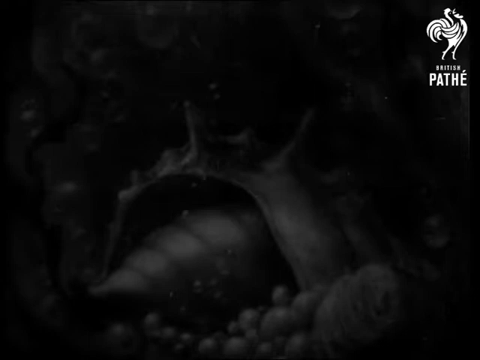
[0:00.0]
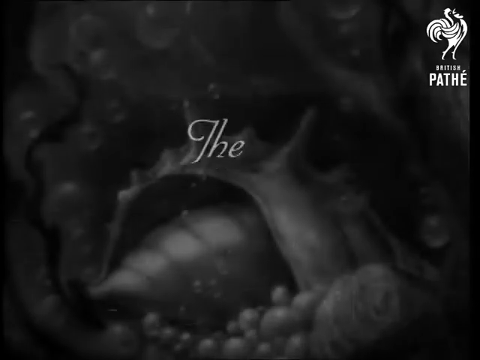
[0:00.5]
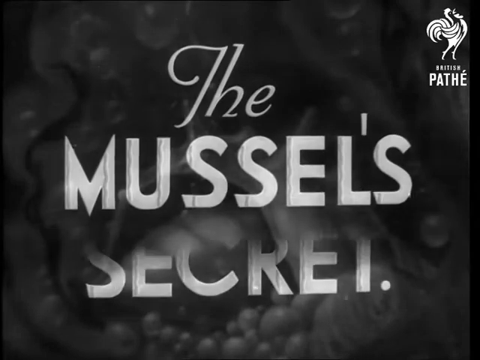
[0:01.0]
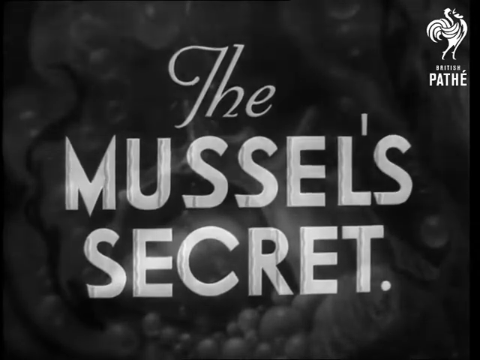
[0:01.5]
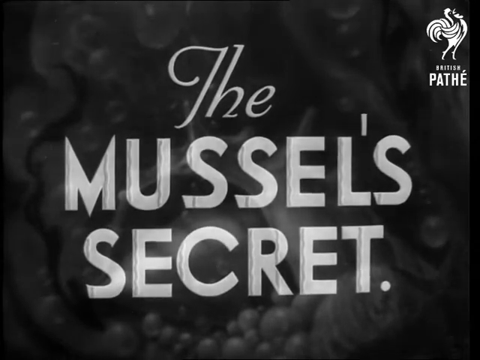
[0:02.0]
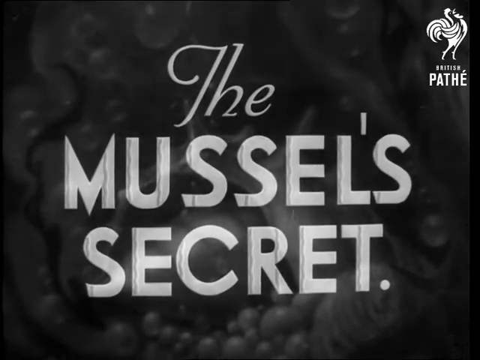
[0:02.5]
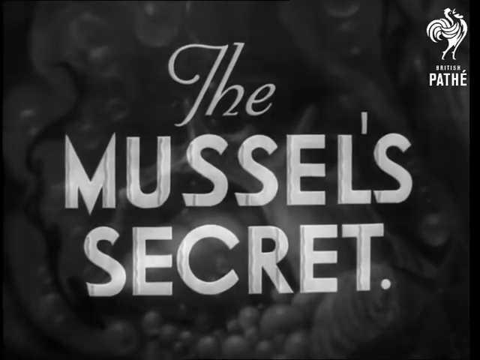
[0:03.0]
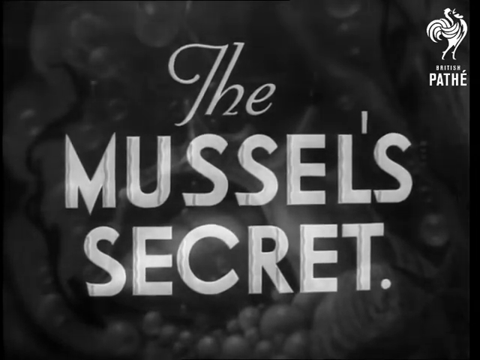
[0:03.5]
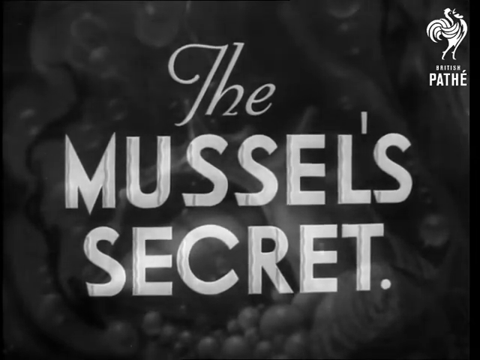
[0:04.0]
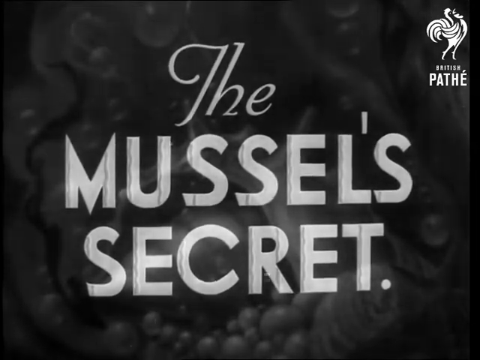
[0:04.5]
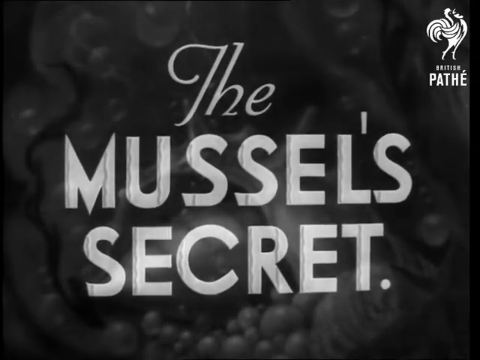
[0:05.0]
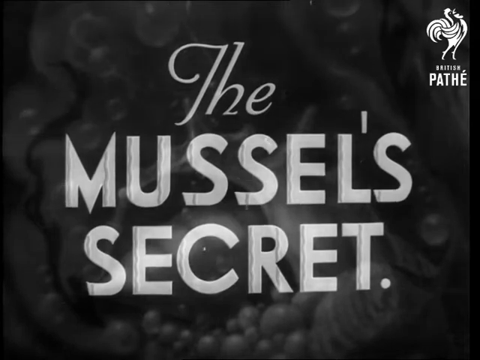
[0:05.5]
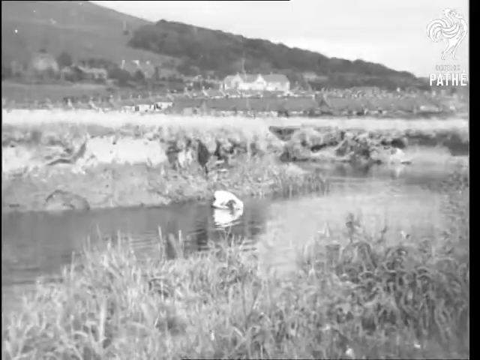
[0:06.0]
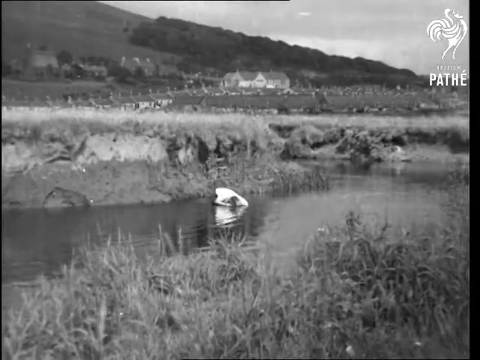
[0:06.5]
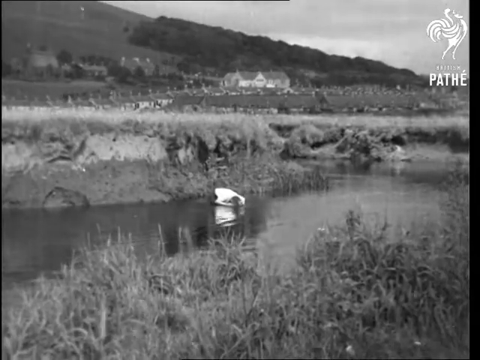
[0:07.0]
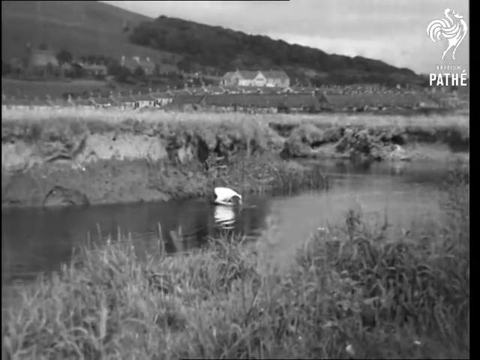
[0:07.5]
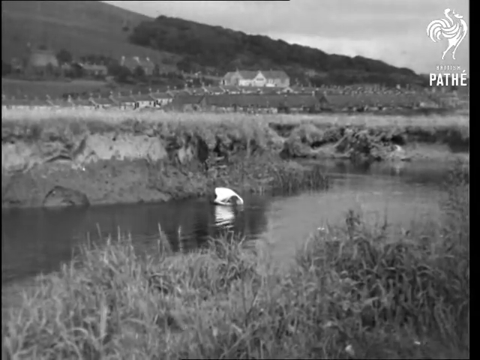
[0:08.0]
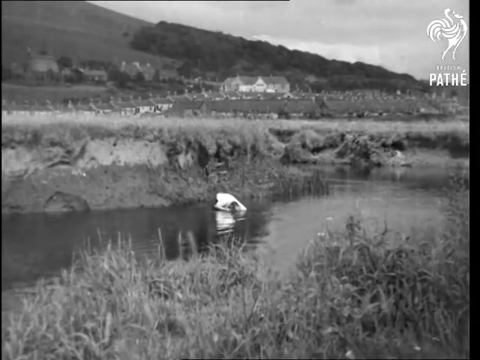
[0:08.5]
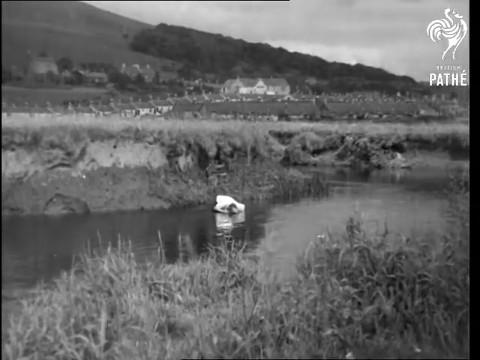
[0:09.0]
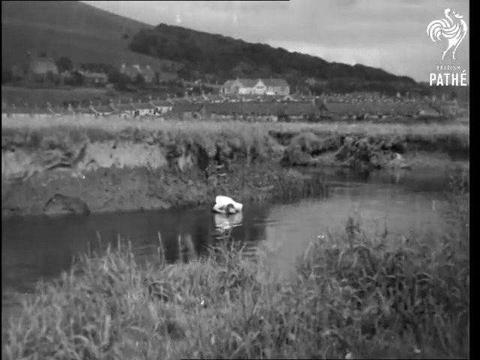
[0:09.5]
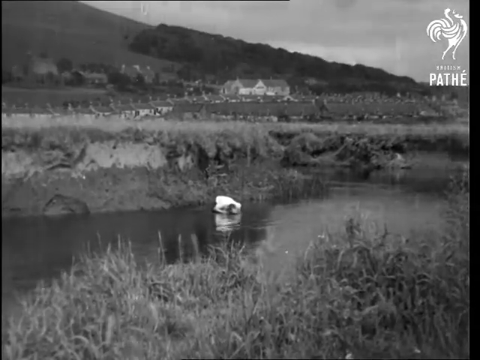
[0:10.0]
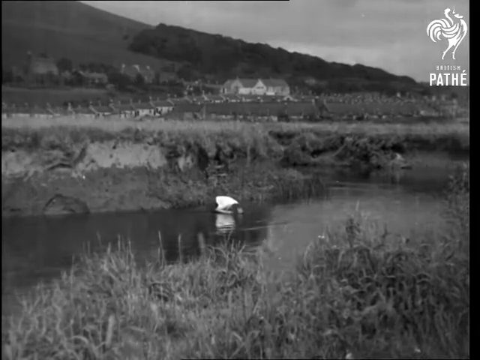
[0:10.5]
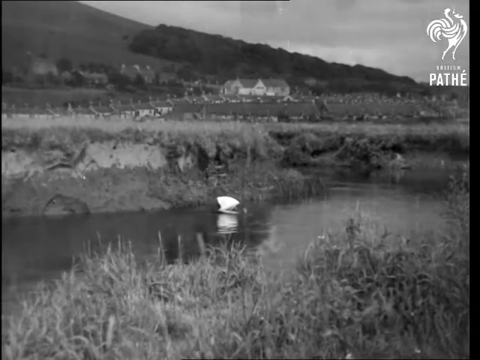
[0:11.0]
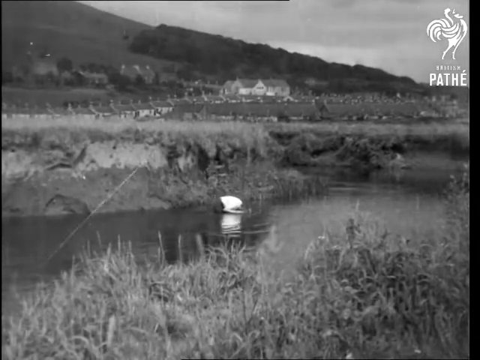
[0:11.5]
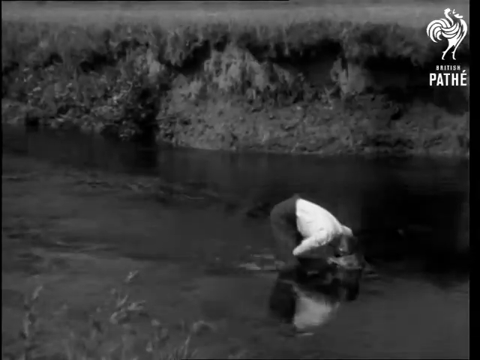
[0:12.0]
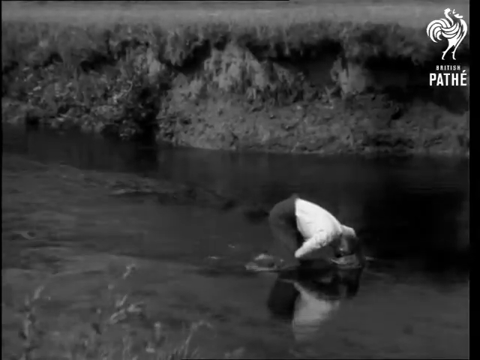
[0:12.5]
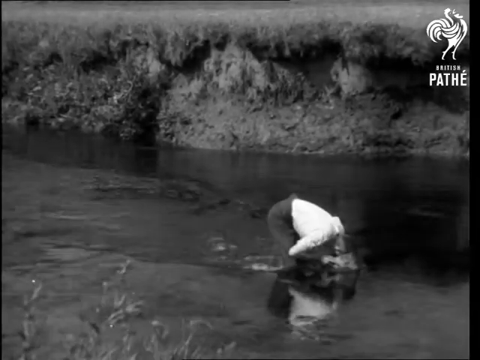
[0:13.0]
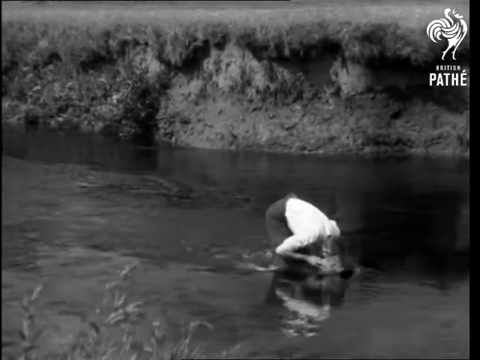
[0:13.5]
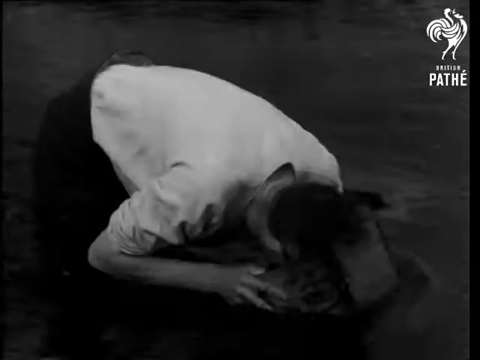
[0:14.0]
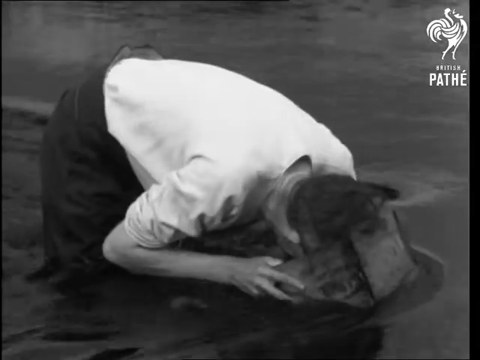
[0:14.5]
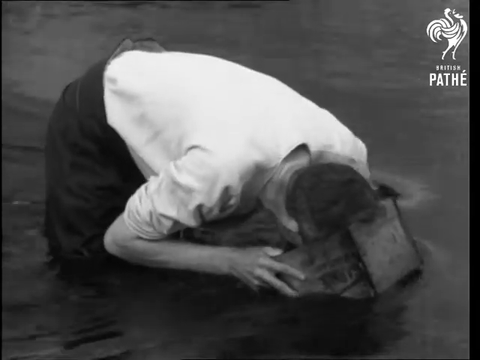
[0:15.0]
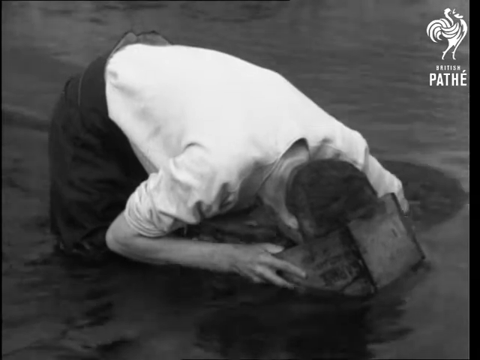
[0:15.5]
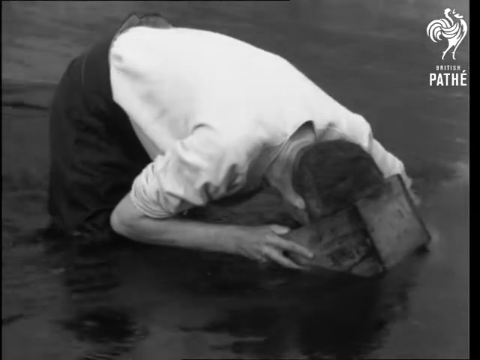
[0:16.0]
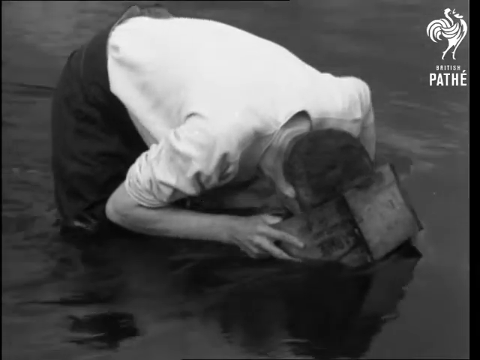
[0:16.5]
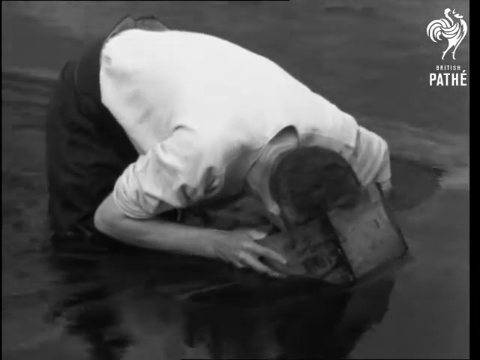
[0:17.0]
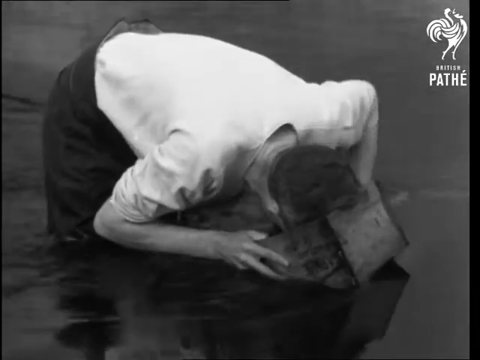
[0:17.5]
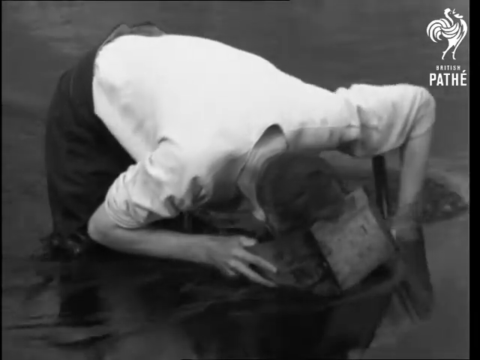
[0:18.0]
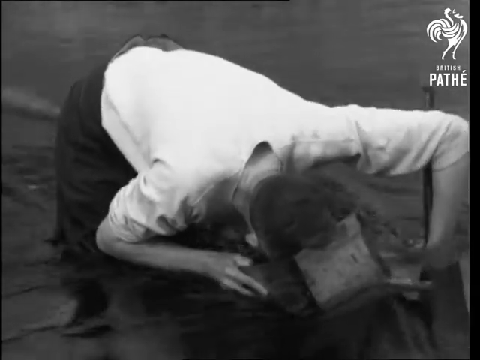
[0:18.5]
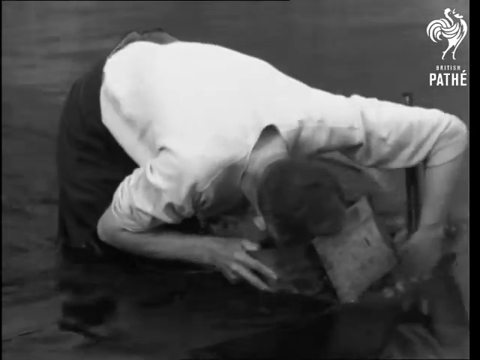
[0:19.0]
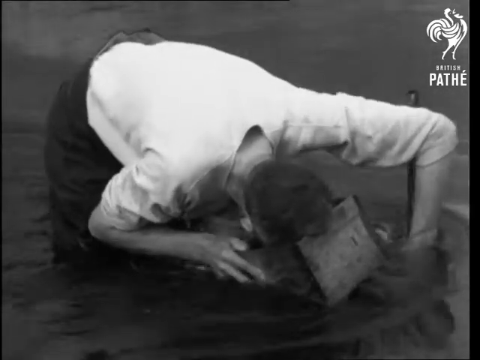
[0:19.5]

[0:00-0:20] The video is in black and white, and an overlay of text appears that says "the mussel's secret." In the upper right-hand corner it says "British Pathe," and there is a rooster crowing. At the beginning, what looks like a pond or a river is visible, with numerous houses along the edges in the background, a hill up to the left, and trees in the distance. The water is surrounded by tall grass. A person is in the water, wearing pants and what looks like a button-up shirt, and wearing something on their head so they can look into the water. The water is a river flowing fairly fast. The person looks through a box, which presumably has glass on the other side; the box is partially submerged, letting them look down to the bottom of the river. In their right hand they hold the box, and in their left hand they have some kind of digging device with a wooden handle.